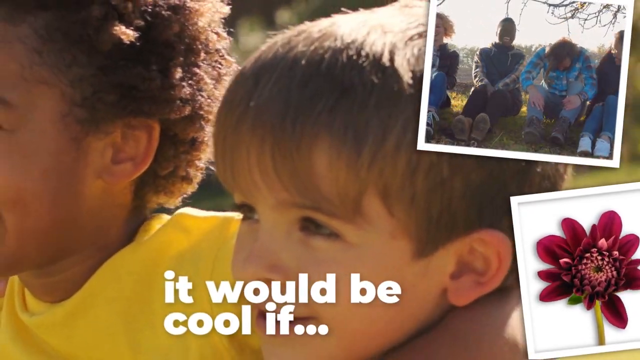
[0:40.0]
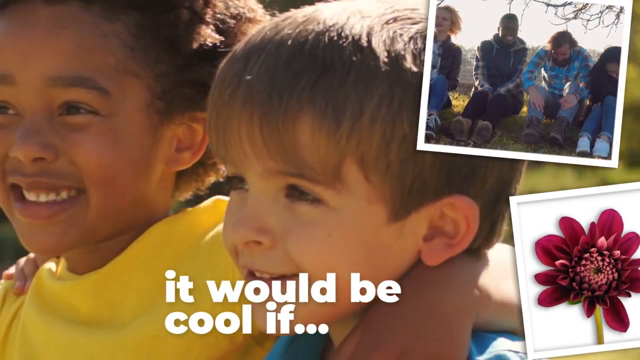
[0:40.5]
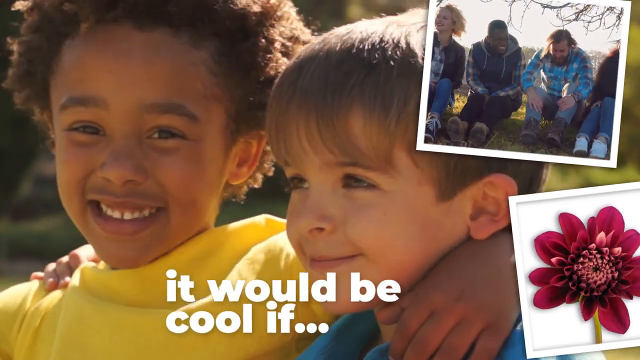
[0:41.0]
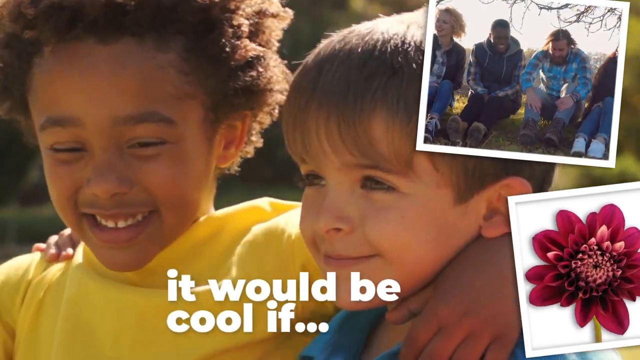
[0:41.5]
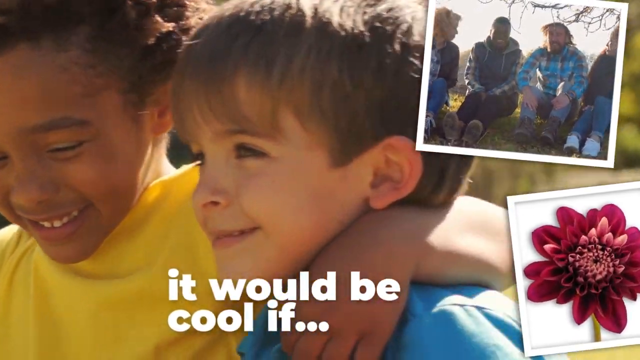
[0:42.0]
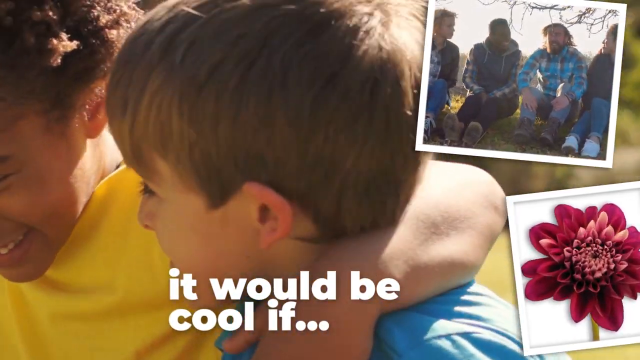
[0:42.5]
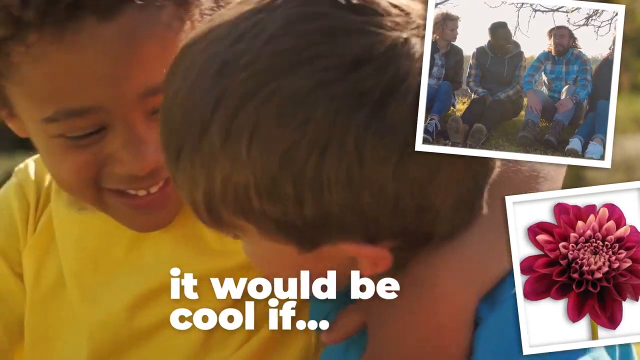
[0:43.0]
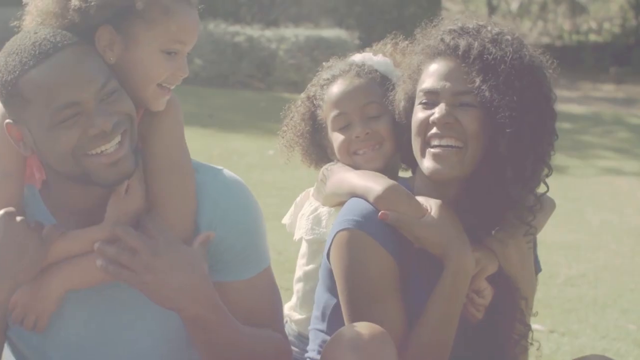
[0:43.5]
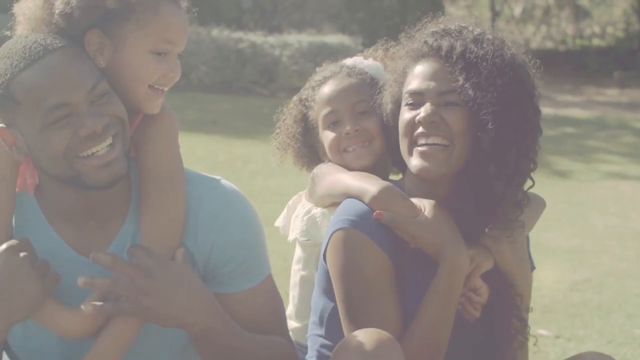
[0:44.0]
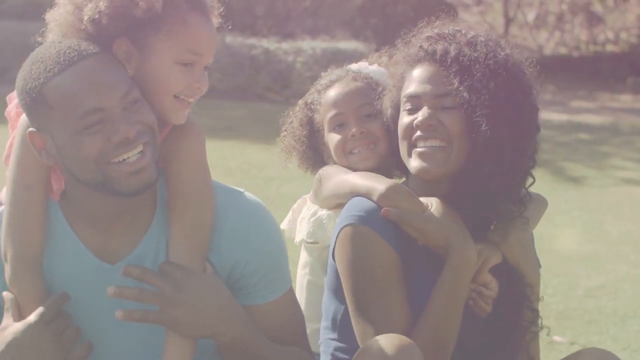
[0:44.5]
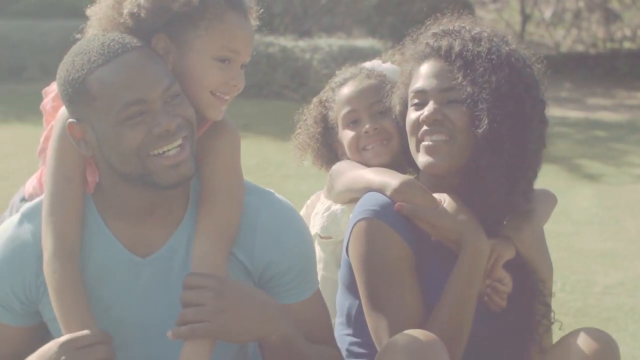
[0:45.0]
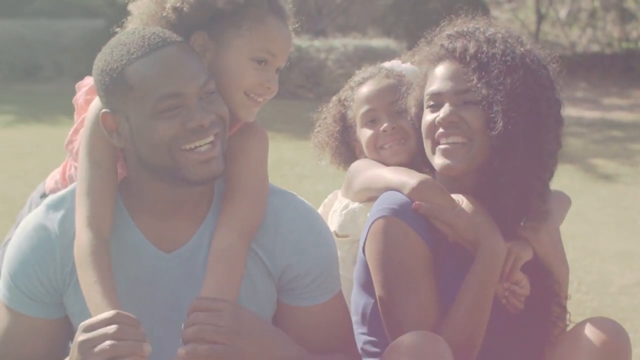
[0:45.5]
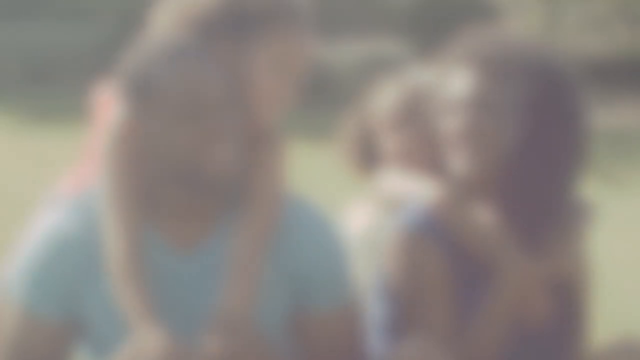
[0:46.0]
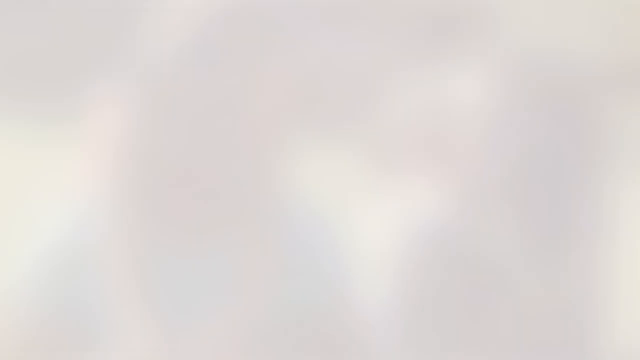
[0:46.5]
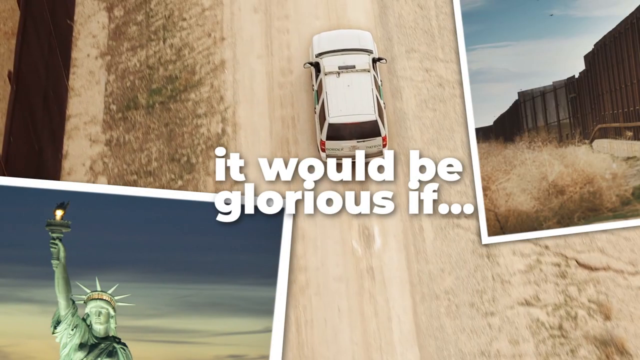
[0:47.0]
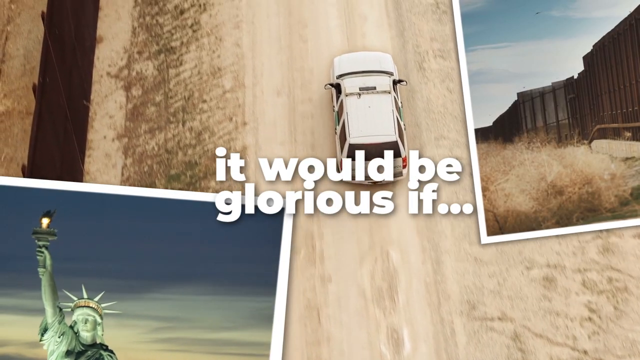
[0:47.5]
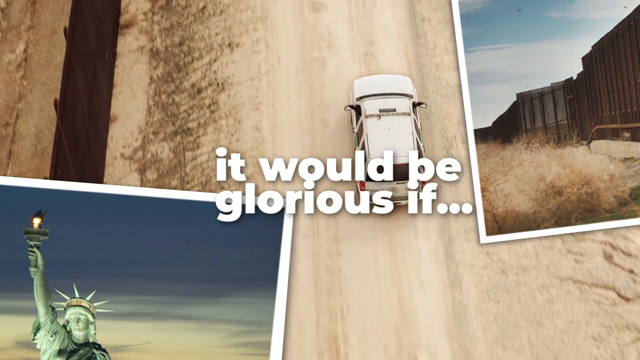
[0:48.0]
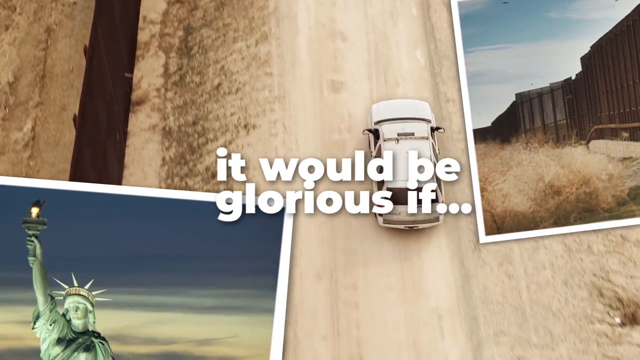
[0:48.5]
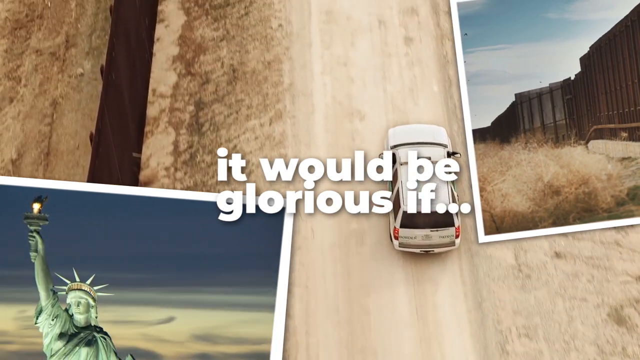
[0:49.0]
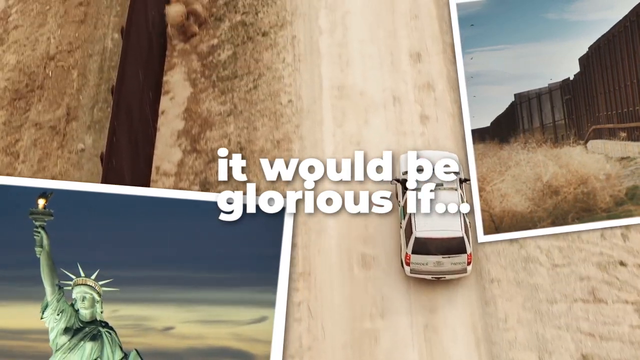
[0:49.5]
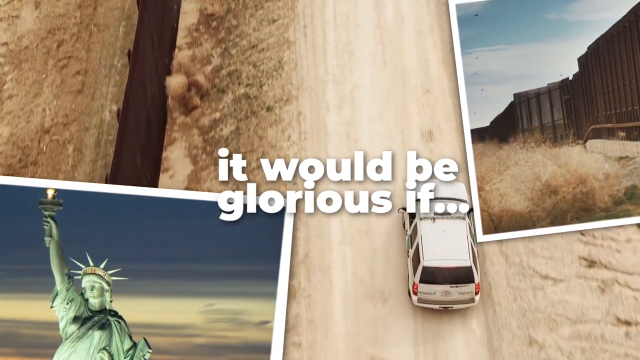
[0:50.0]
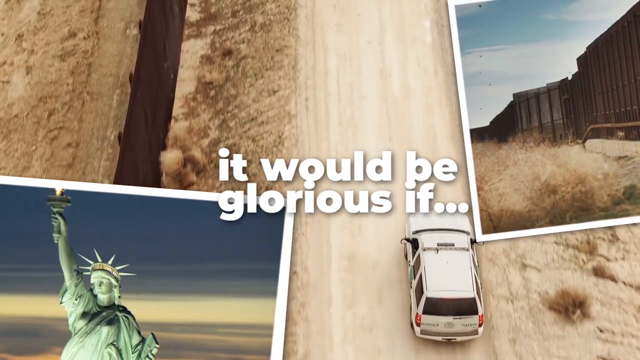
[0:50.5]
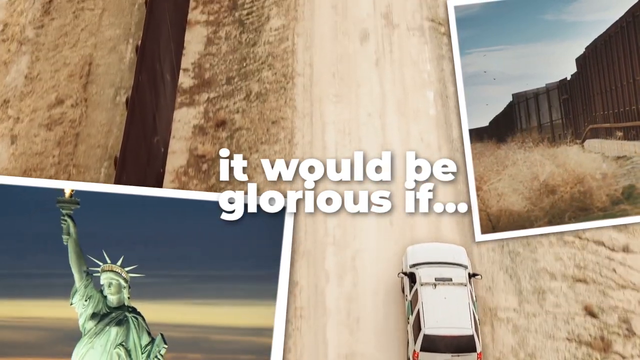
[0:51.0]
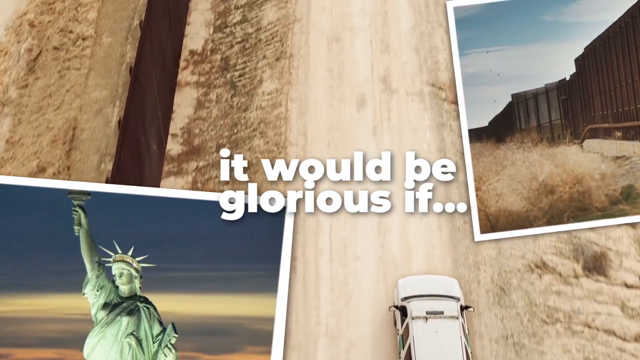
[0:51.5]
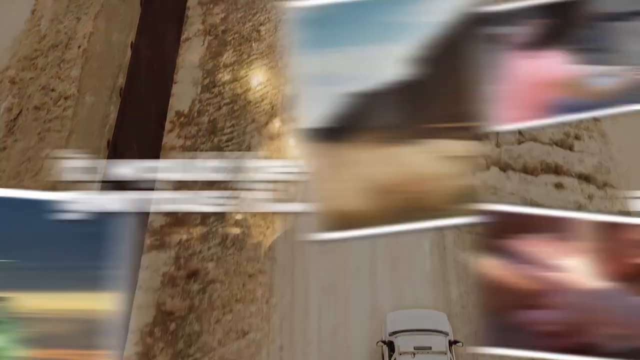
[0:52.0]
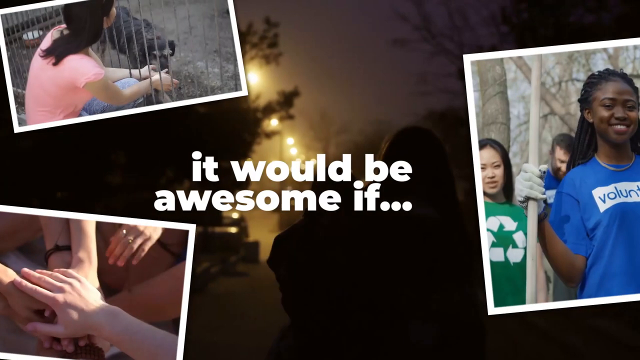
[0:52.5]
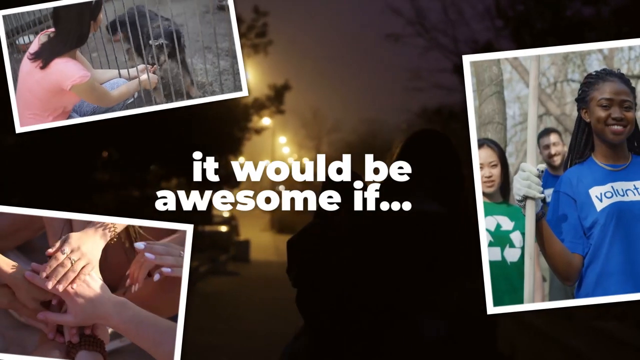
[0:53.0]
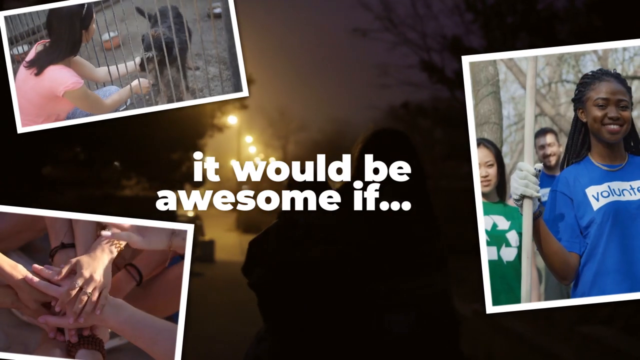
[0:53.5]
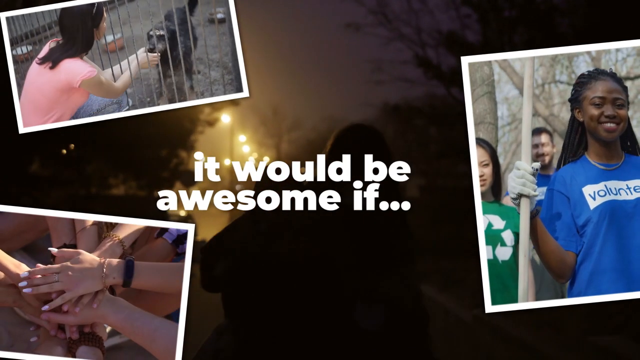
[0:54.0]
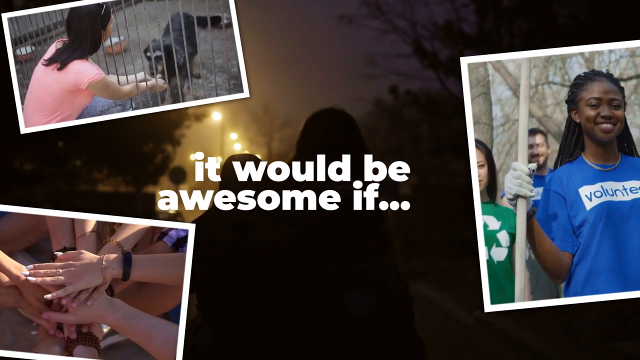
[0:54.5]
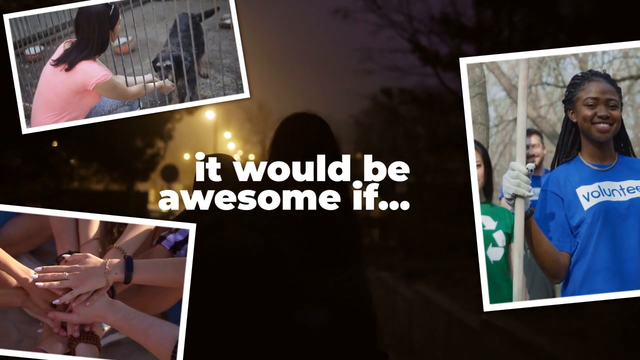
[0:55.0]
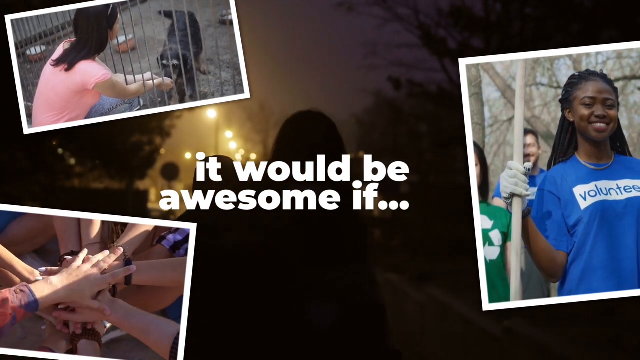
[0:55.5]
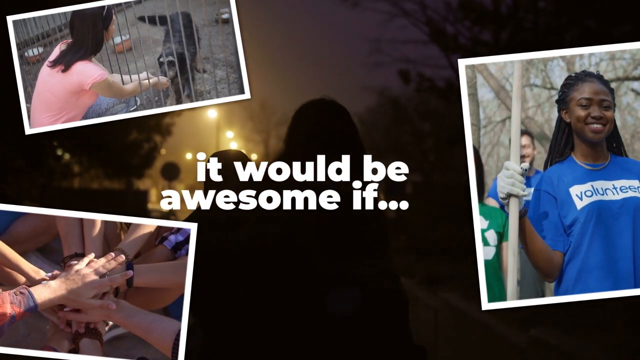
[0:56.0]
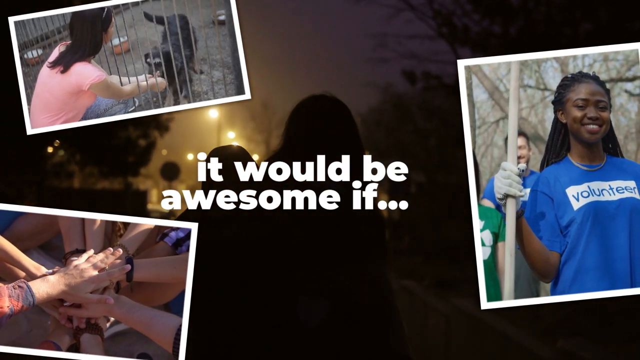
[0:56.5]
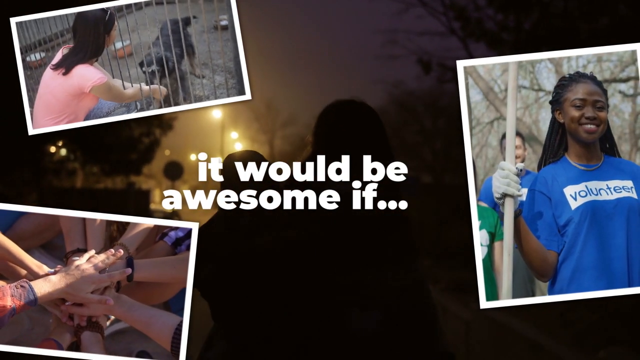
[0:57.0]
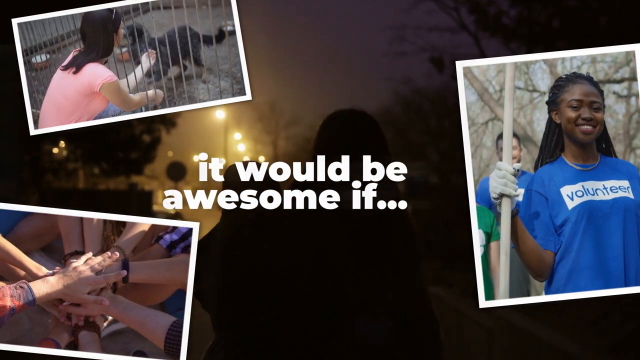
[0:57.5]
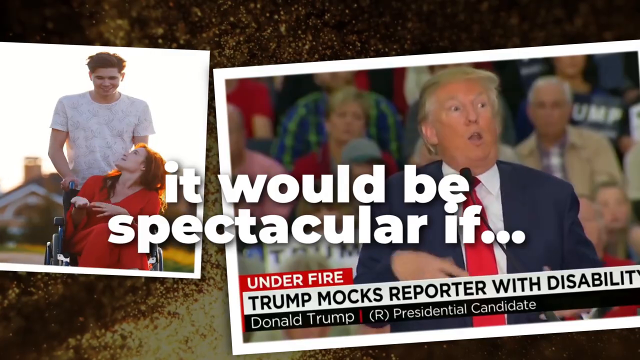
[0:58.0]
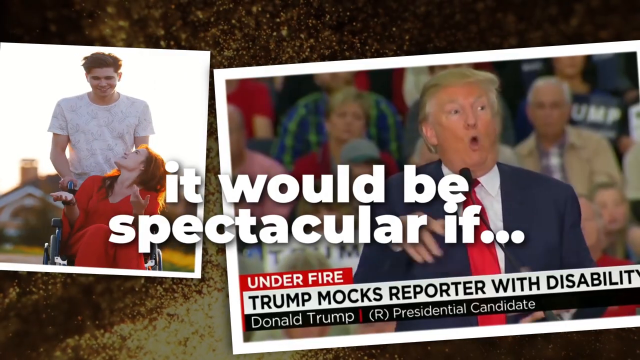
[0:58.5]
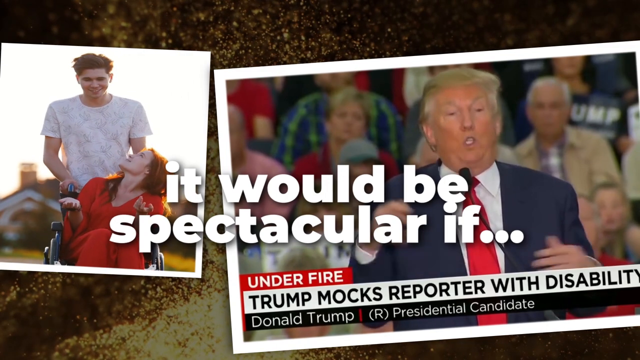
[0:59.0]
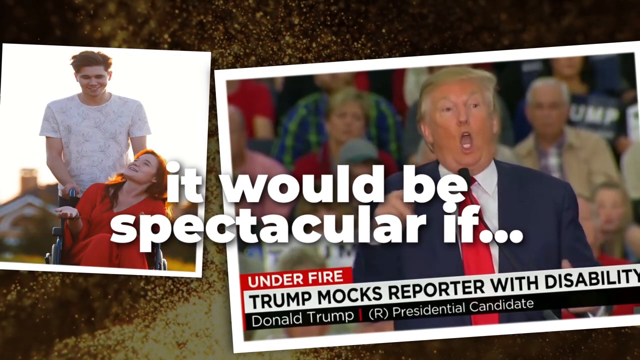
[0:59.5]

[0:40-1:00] Two small children appear, one looking at the camera and one looking to the left. Text at the bottom says "it would be cool if...". In the top right is a small photo or video clip of four people sitting on some grass; the two males in the centre are laughing. In the bottom right, a red flower is blooming and opening. The small children on the left-hand side are laughing. This fades into a faded shot of a family. A male adult on the left holds a small girl around his shoulders, her arms dangling around his shoulders. He wears a light blue v-neck and holds the child's forearms, and she looks to the left-hand side of the scene. They are all smiling. A transition leads to an overhead shot of a car on a desert road, with text reading "it would be glorious if...". At the top right is a fence or a wall, and in the foreground there is some dirt and the sky. In the bottom left is a cropped thumbnail of the Statue of Liberty. These are all moving thumbnail pictures. The next scene has white text in the centre saying "it would be awesome if...". The background is dark and appears to show two people walking down a road. In the top left, a woman holds or touches a dog through vertical fencing. In the bottom left, a group of hands are all placed in the centre. On the right-hand side is a woman in a blue t-shirt with "volunteer" on it; her right hand has a glove and holds a stick. Behind her are two more people: a female on the left in a green t-shirt with the recycling logo, and a male just behind them, also wearing a blue t-shirt.